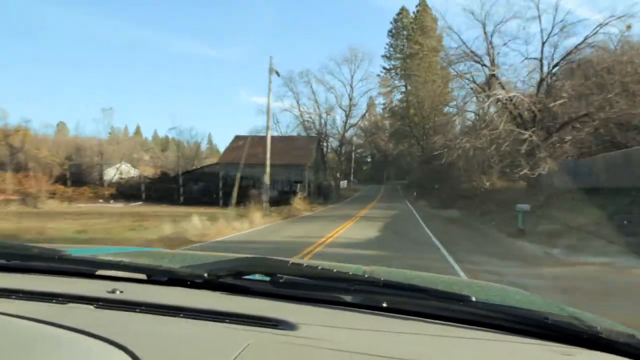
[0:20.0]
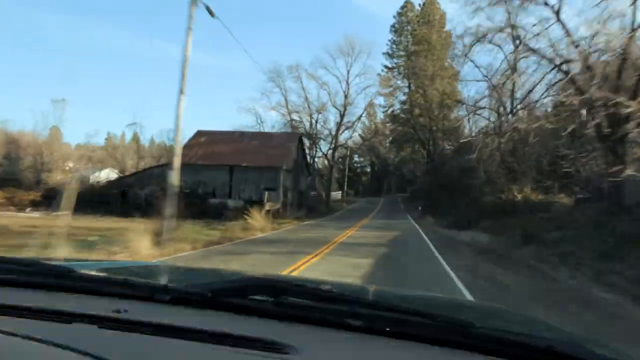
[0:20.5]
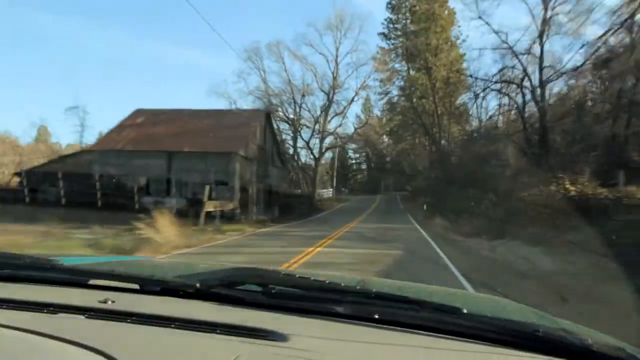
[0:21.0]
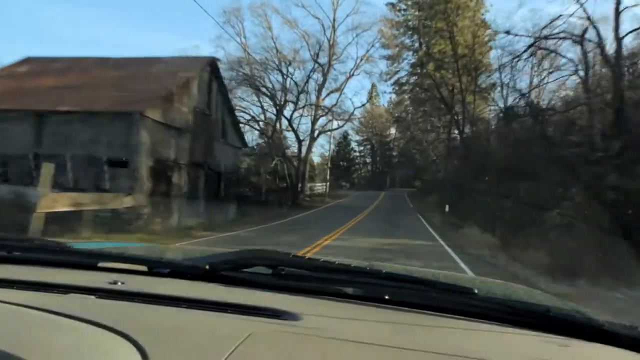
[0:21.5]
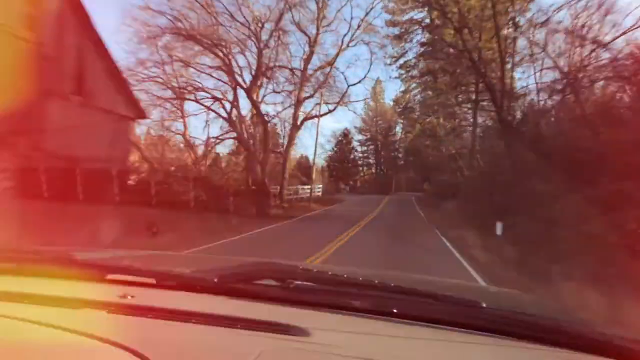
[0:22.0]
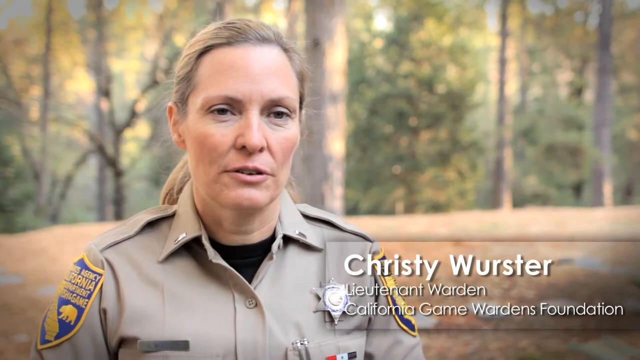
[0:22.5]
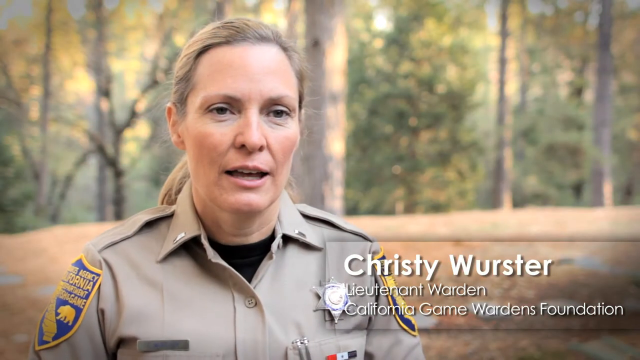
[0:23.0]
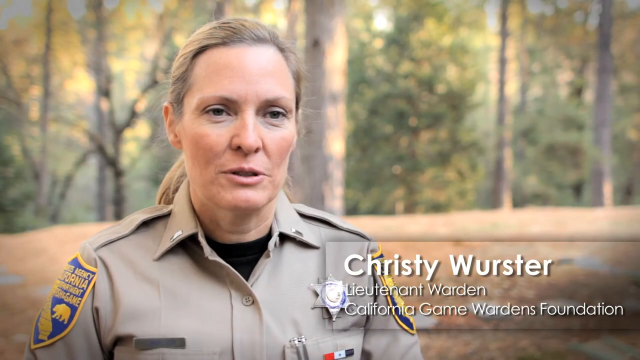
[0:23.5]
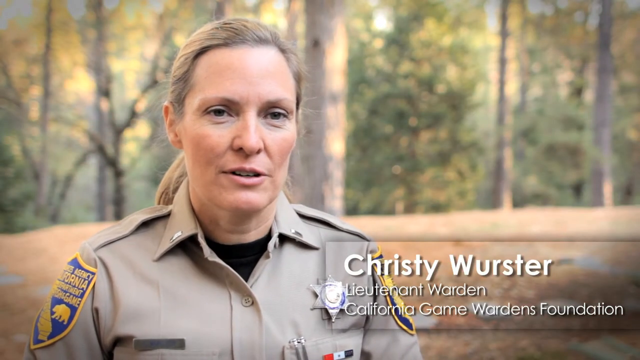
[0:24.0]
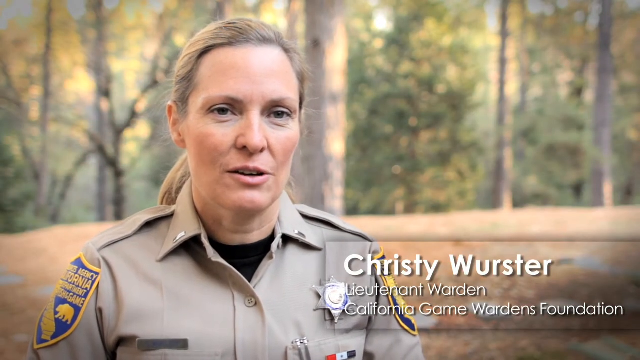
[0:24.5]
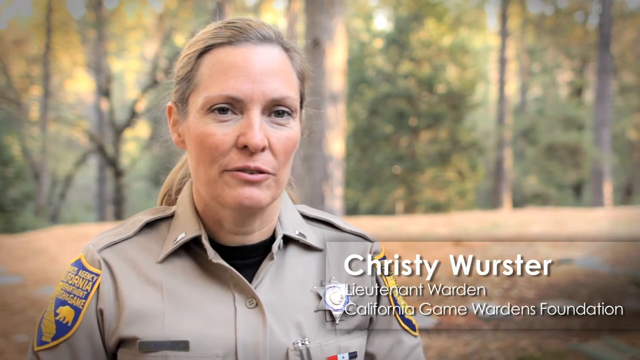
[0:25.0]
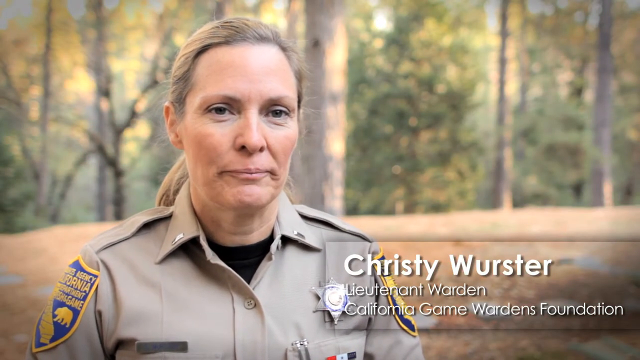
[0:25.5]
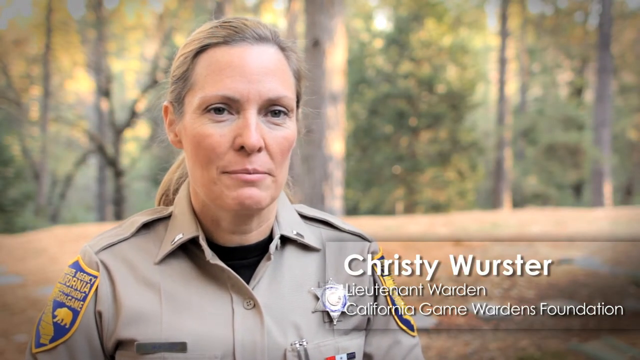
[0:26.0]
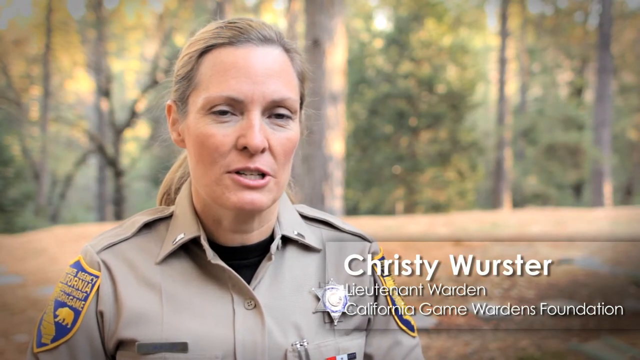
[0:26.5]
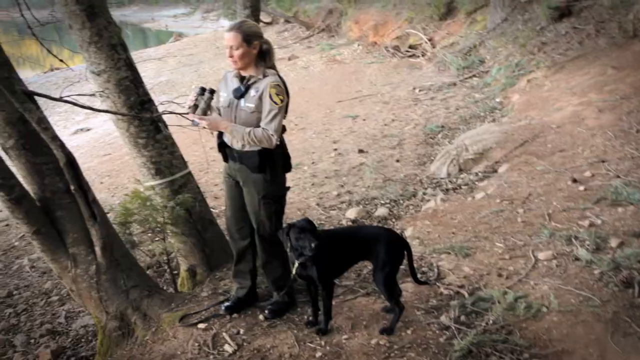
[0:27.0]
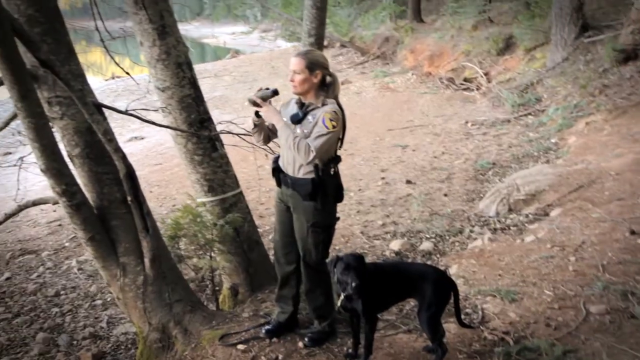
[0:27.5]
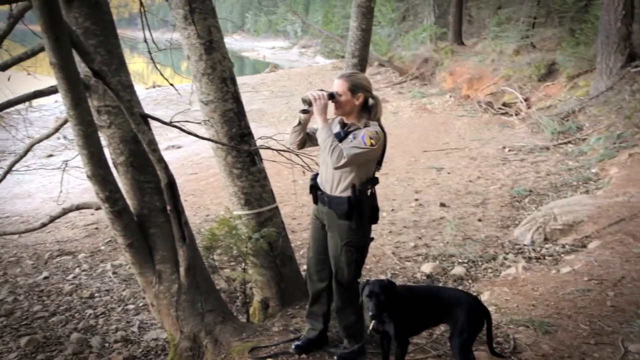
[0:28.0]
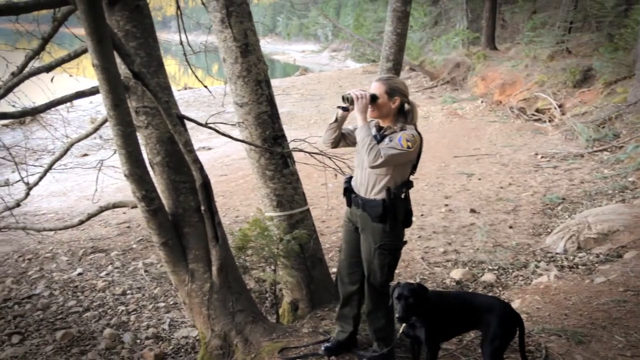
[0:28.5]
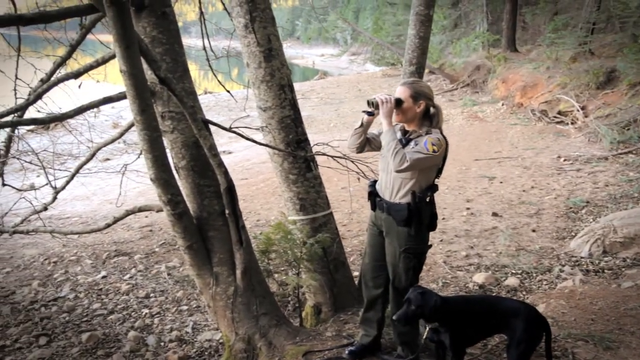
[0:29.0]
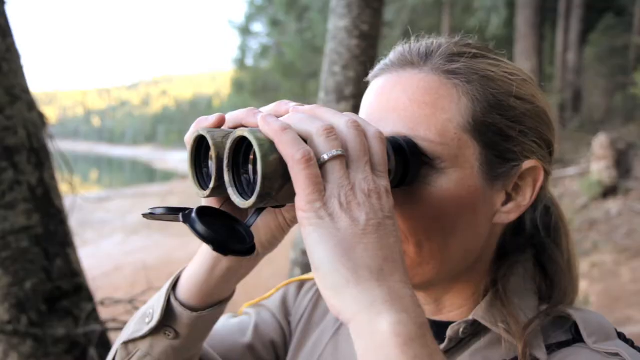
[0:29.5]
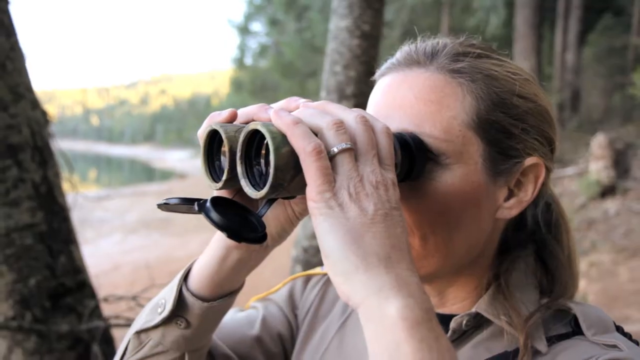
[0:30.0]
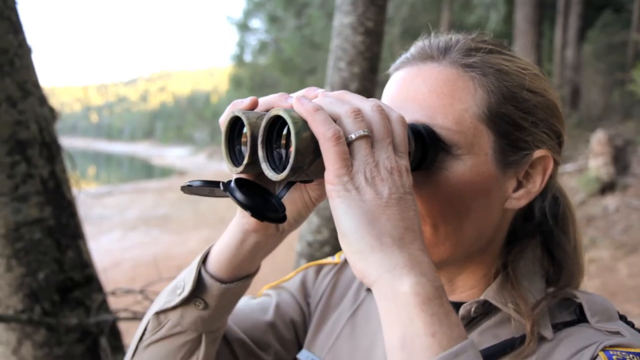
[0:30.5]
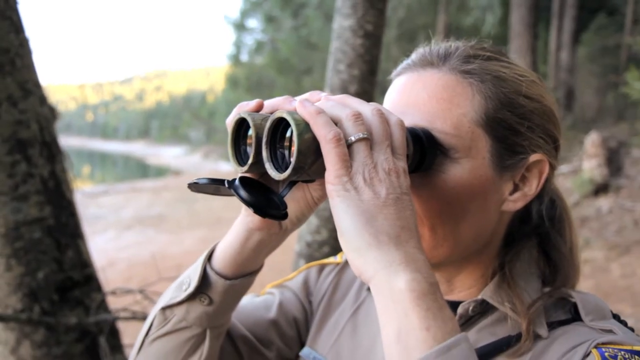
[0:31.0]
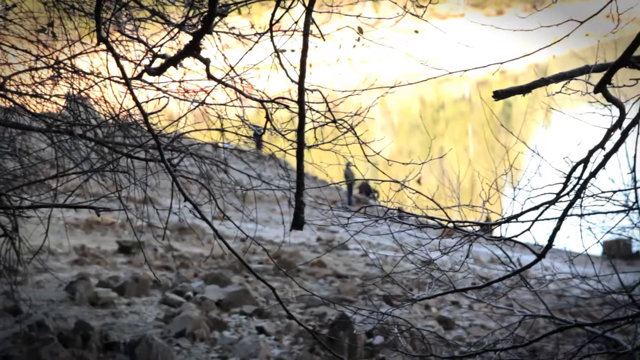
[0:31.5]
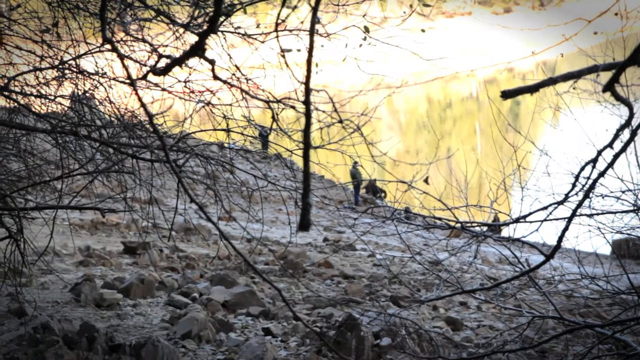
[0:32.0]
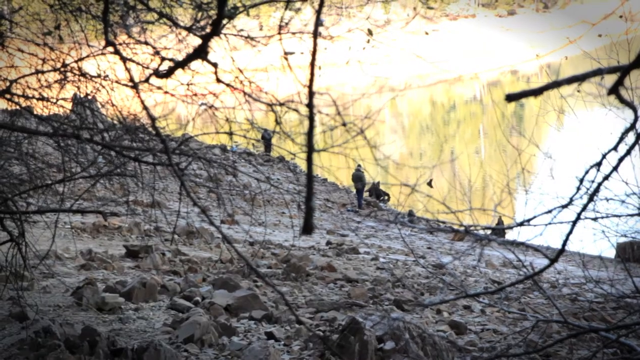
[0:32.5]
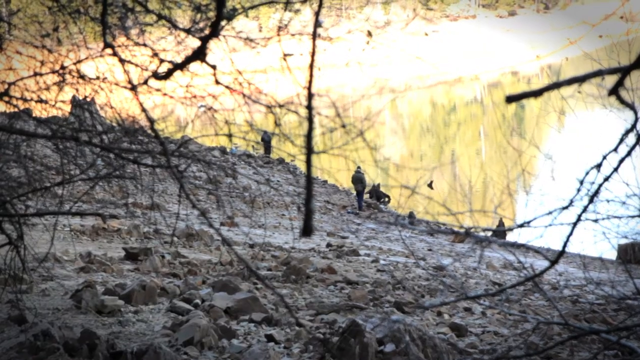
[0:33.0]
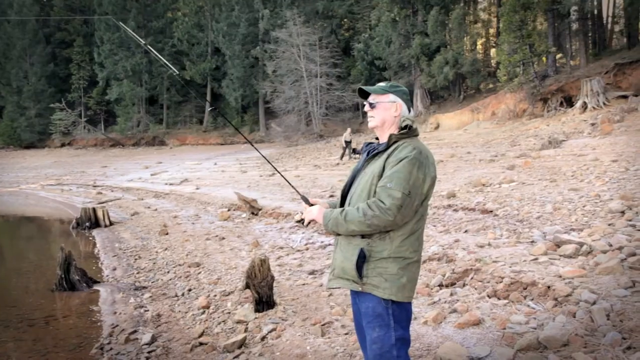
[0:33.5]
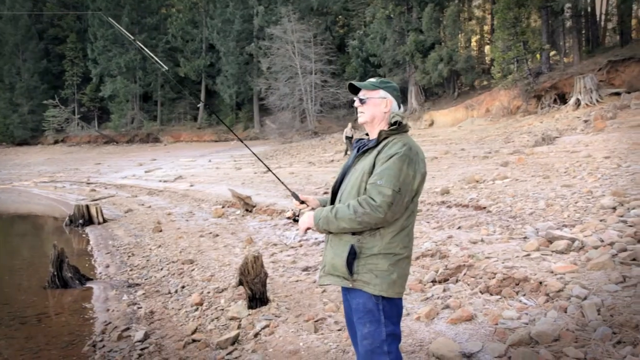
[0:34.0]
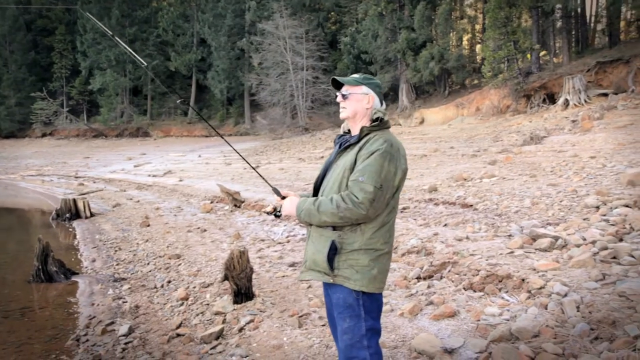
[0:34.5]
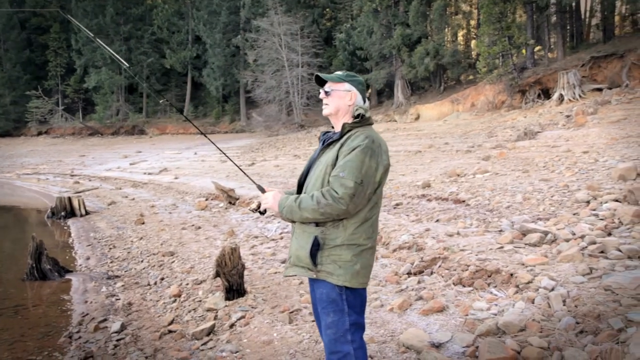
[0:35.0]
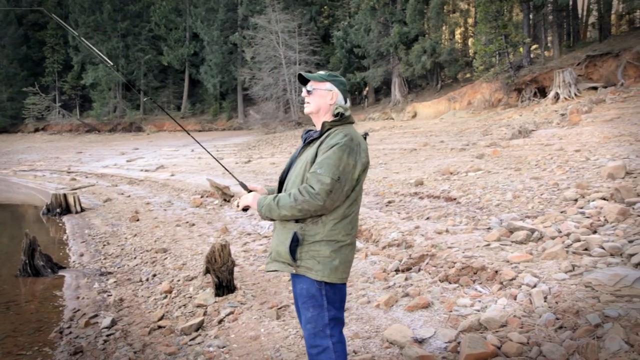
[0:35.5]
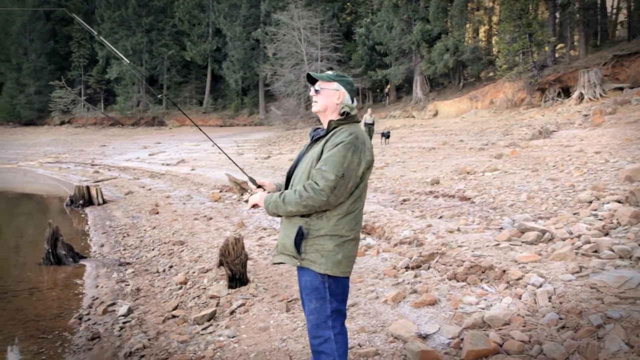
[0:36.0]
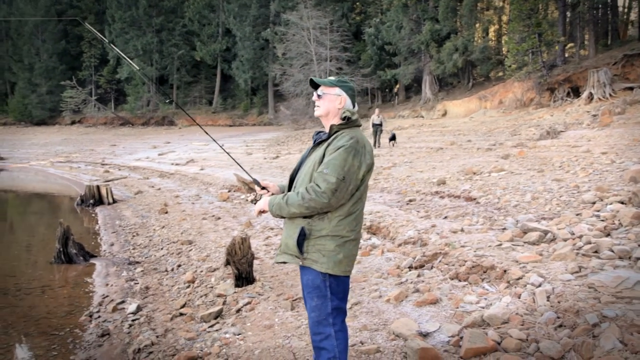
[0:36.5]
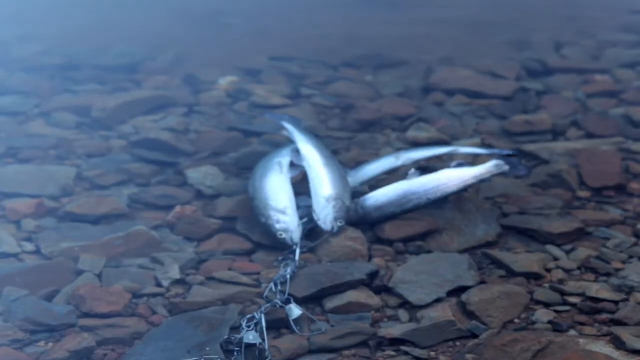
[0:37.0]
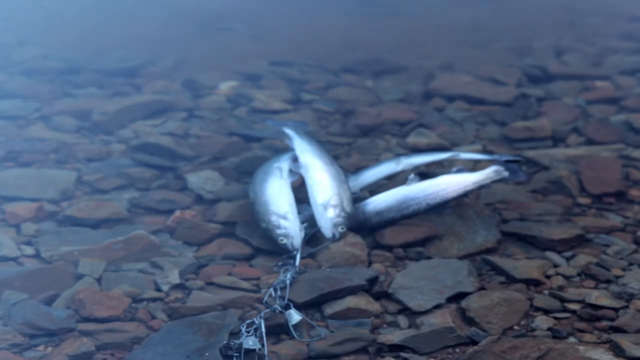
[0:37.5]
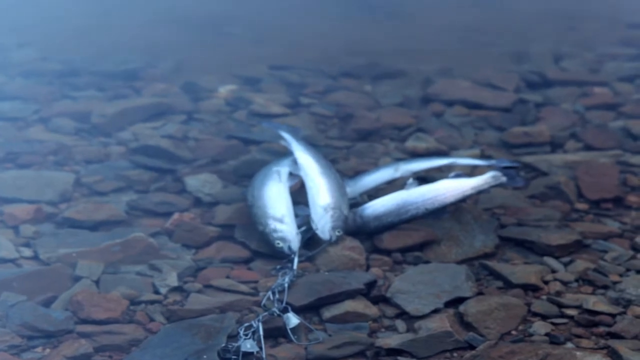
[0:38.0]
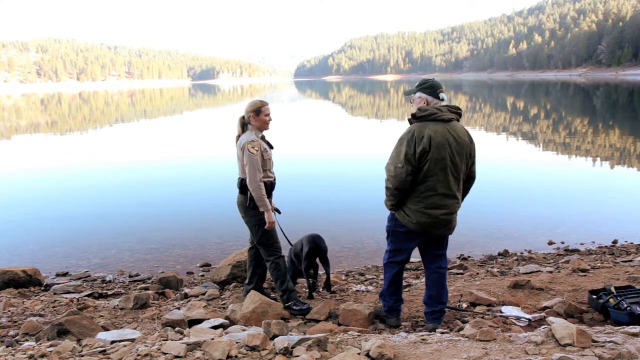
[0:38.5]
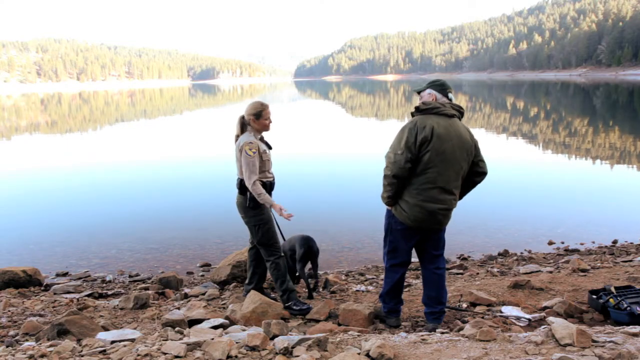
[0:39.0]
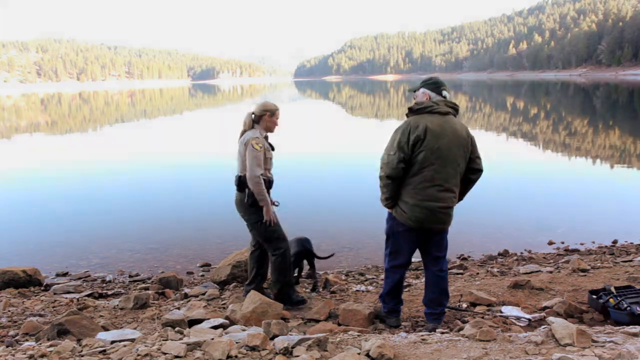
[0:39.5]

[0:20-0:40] The outside of the car the officer is driving is shown, along with a remote road that has a small building on the left side that looks run down and old. Trees and grass line the road she drives down. Her name appears at the bottom right of the screen as she talks to the camera, seemingly standing in front of a large wooded area; she is Christy Wurster, Lieutenant Warden for the California Game Wardens Foundation. She wears a black undershirt beneath her uniform, which has a large collar and buttons on the end of each side. Christy is then shown with a black lab on the side of one of the wetland areas. She uses a pair of binoculars to get a closer look at a group of people in the distance who seem to be fishing. She walks up to the group with her dog behind her. There are some dead fish in the pond the man is fishing out of. Christy has a conversation at the bottom of the steep hill where the lake is.